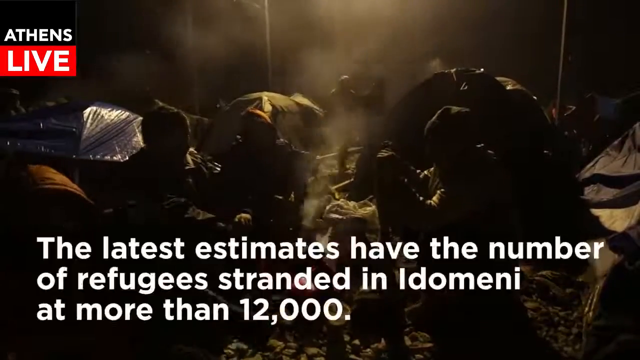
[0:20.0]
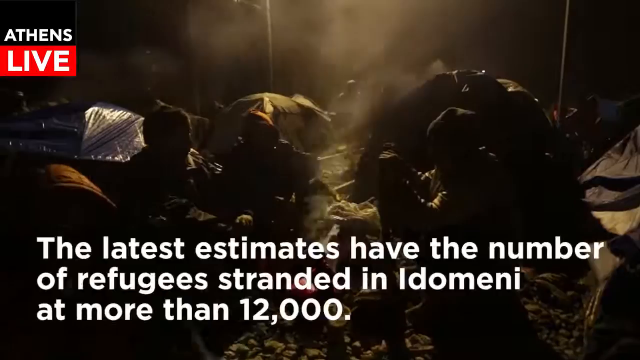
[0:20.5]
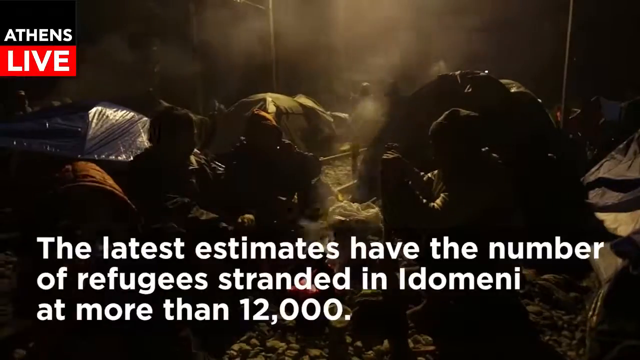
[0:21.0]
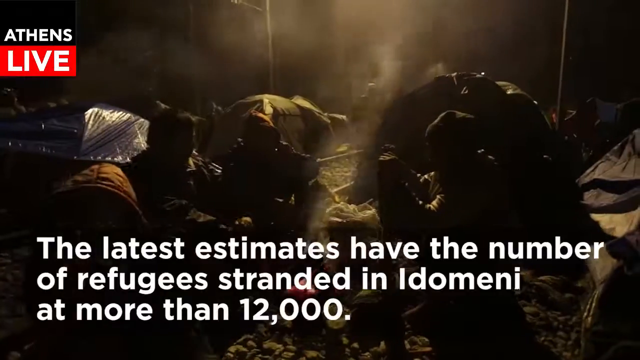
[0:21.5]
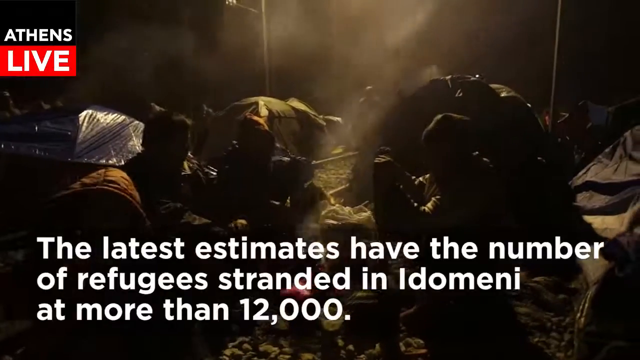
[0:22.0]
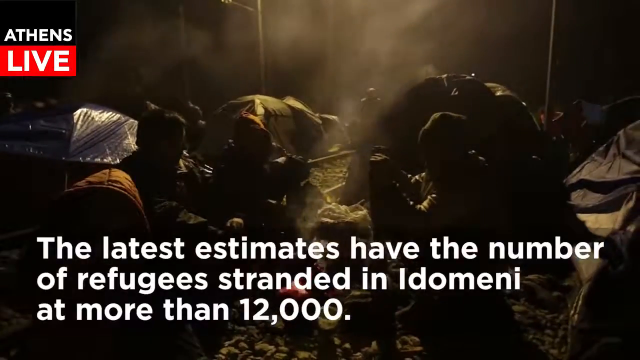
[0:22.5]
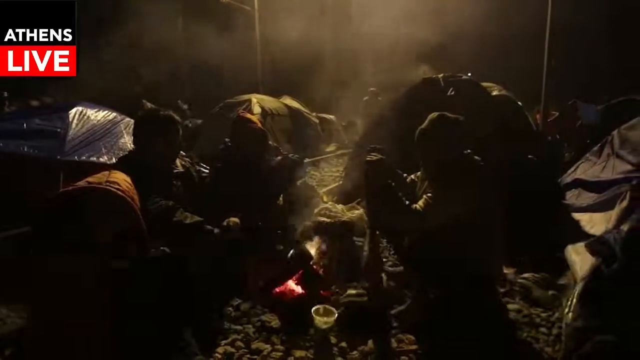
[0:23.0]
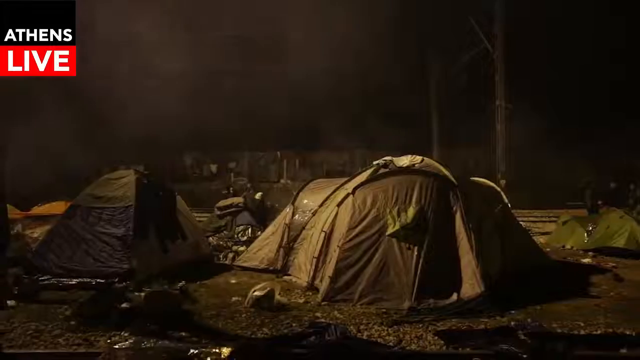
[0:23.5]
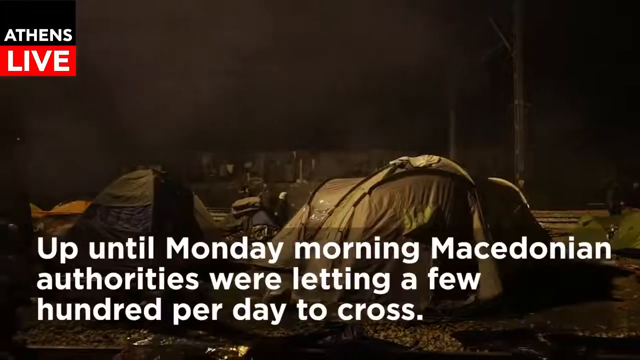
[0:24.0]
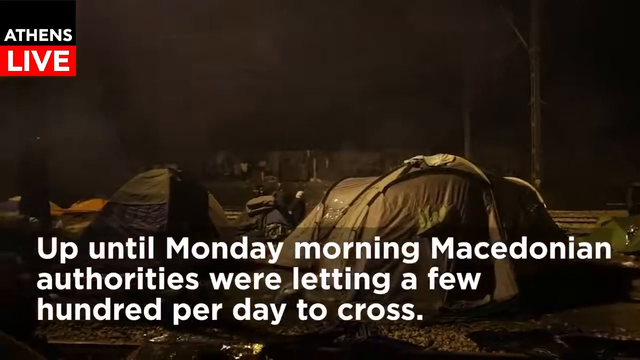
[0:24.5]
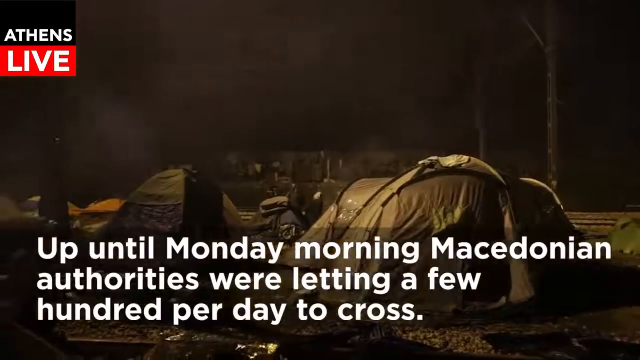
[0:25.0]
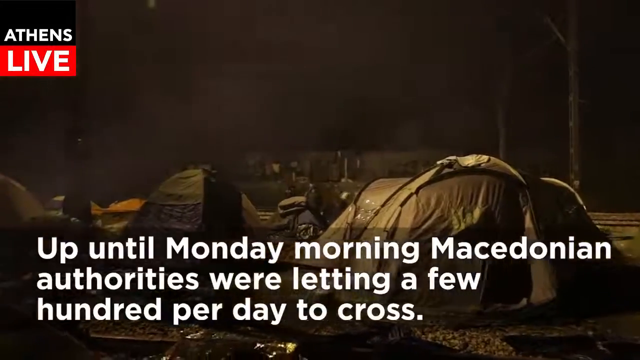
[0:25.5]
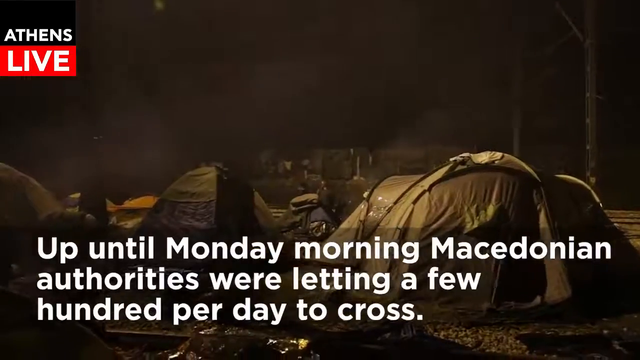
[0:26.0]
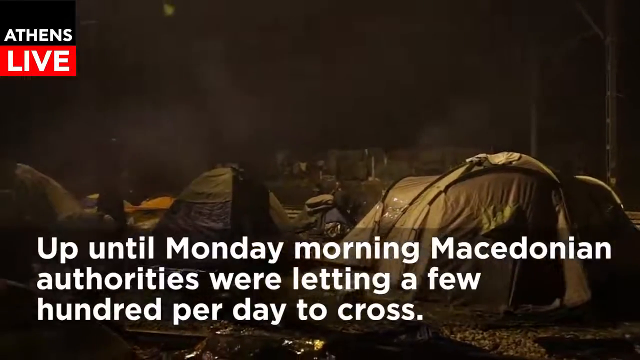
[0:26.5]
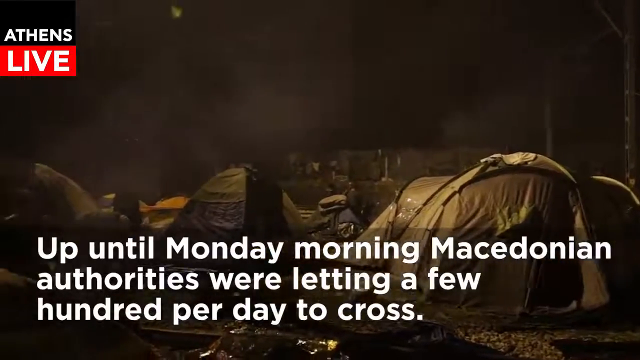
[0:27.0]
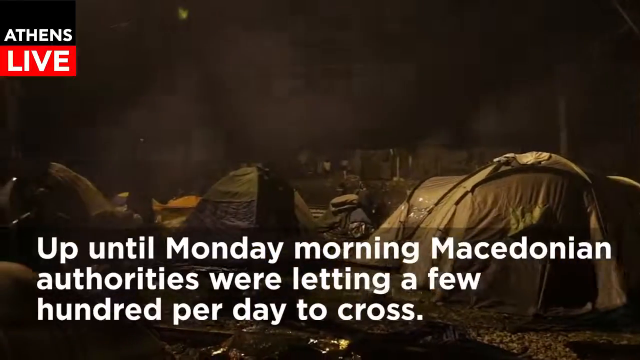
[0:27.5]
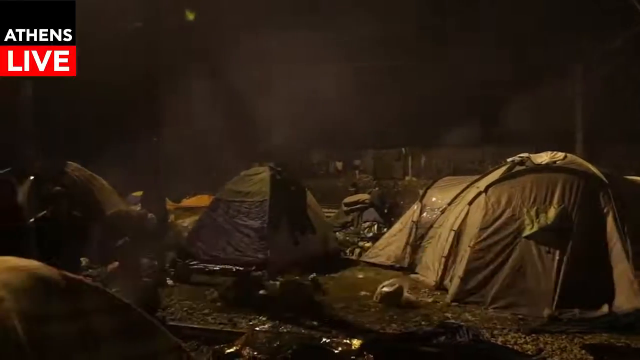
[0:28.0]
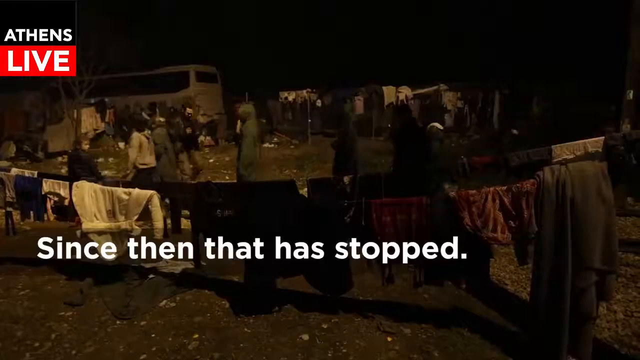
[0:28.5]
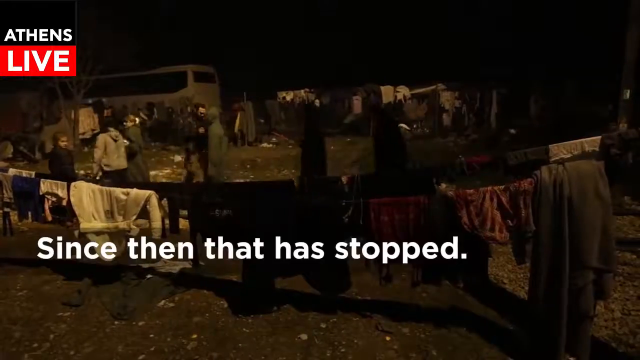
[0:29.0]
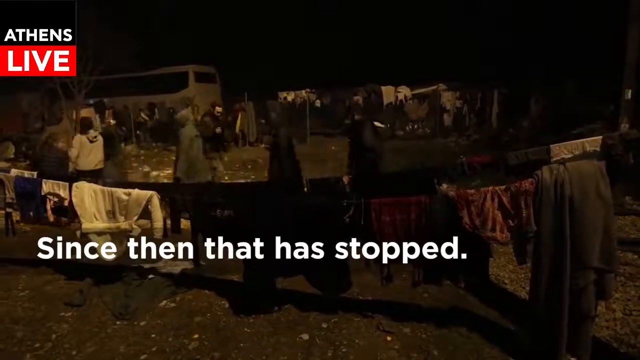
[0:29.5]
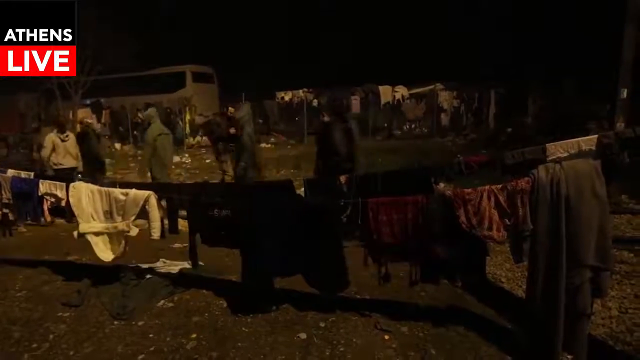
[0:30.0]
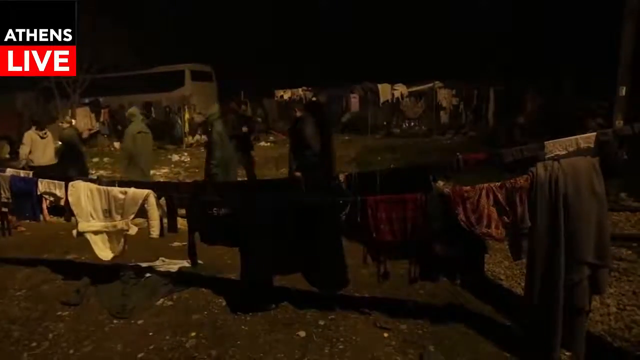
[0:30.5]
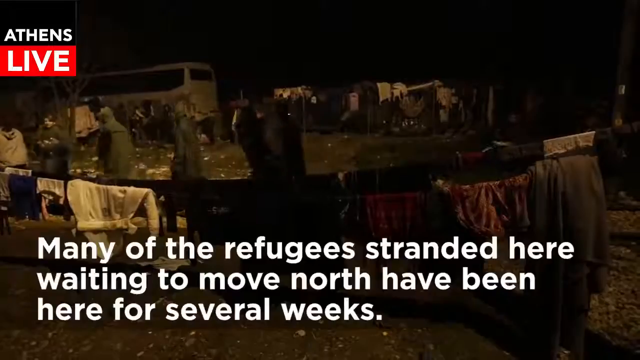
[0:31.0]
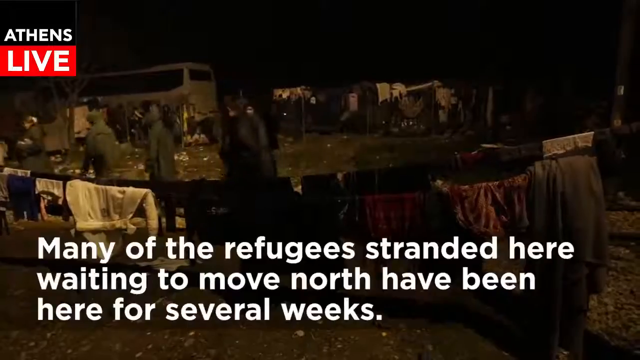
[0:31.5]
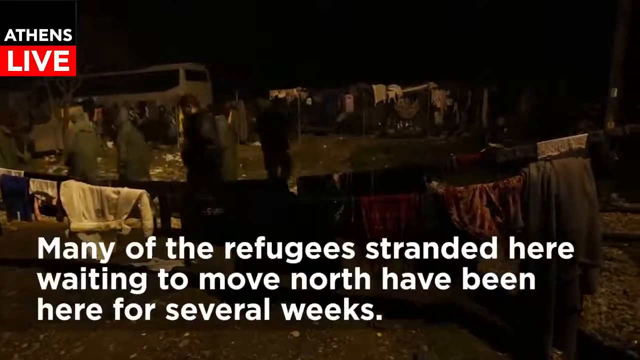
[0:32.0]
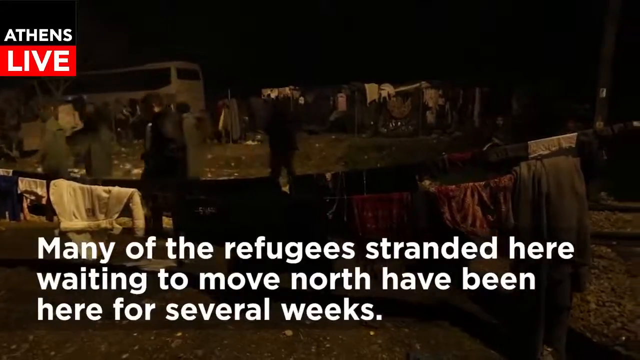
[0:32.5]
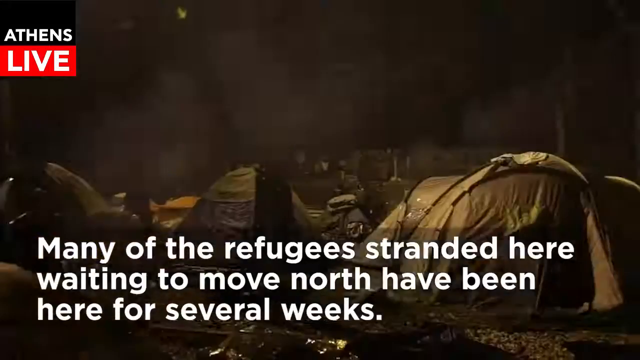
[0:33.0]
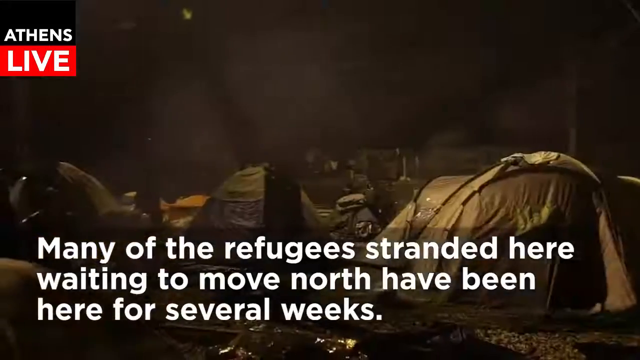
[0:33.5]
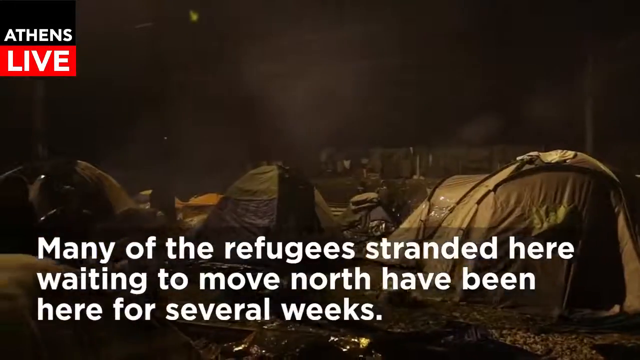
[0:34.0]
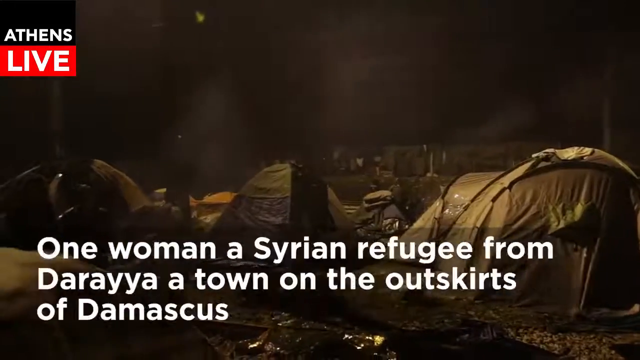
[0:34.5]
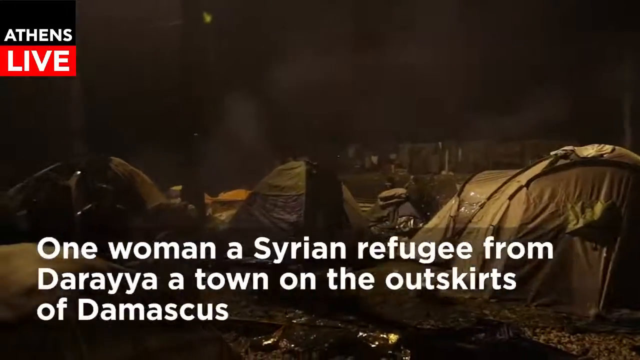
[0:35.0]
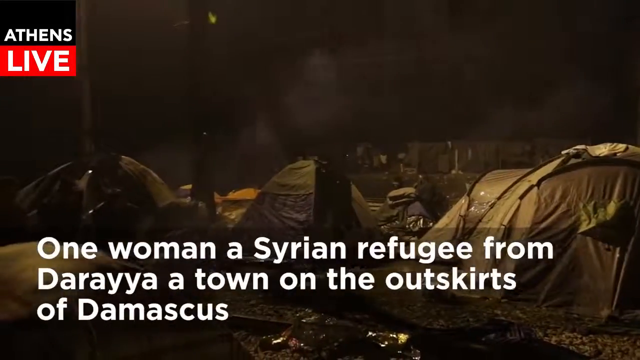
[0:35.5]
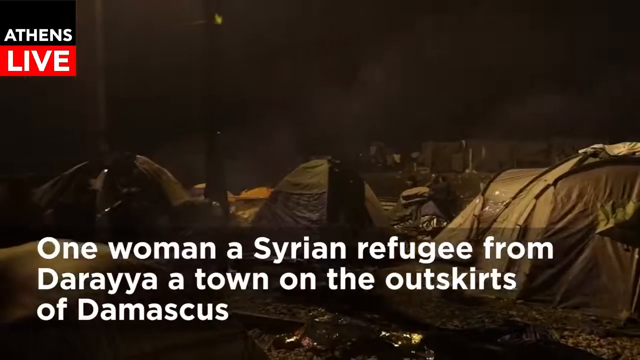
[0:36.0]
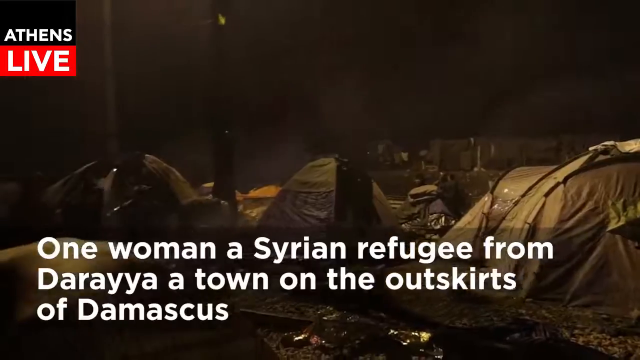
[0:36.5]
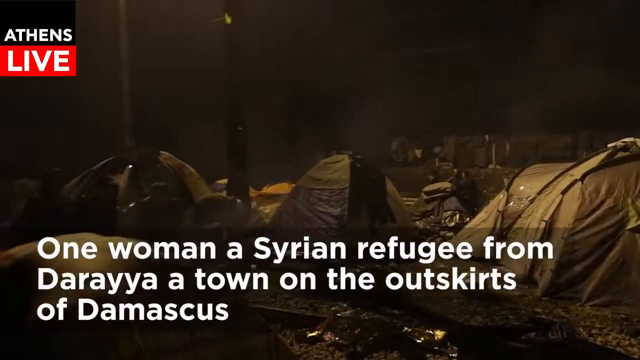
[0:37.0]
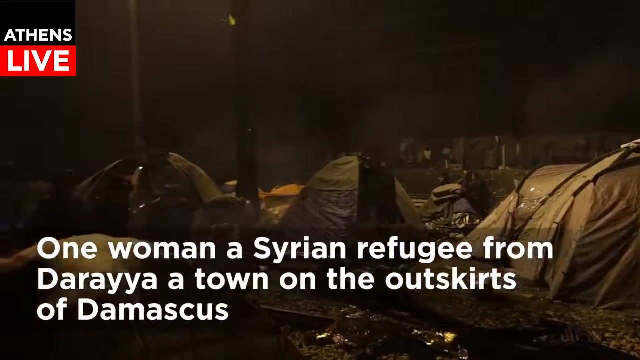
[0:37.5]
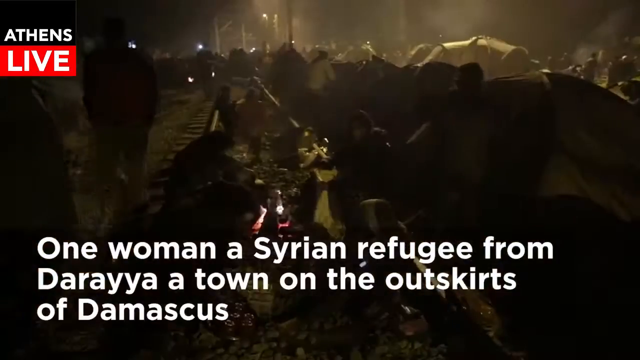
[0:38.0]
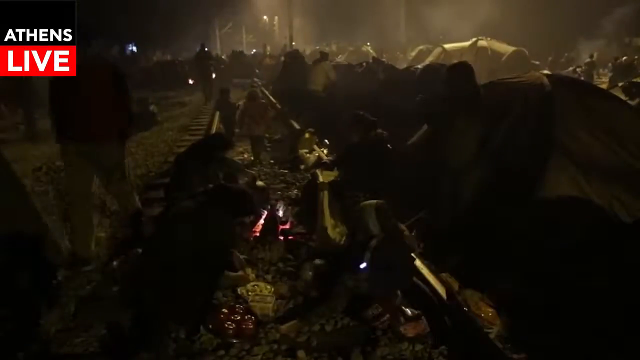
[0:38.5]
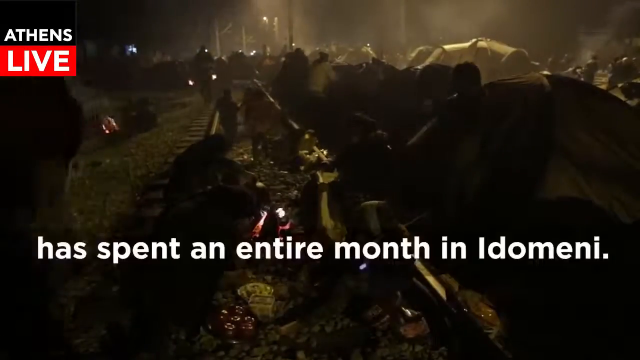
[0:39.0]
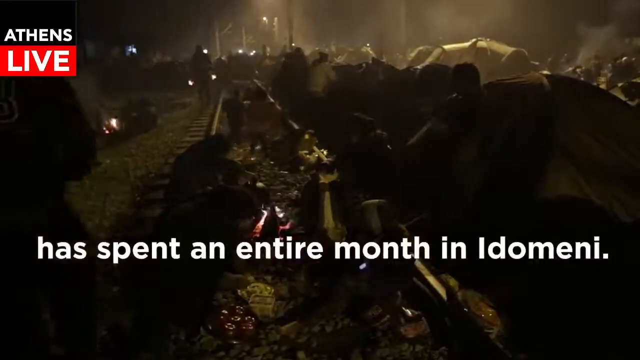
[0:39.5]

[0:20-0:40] Refugees are in an area with very rugged and rigid conditions, shown from different views and angles. There are many tents, and people walk along and by some train tracks; some people are camping on the train tracks. Fires are lit and smoke is in the air. A caption reads: "the latest estimates have the number of refugees stranded in Edimi at more than 12,000. Up until Monday morning, Macedonian authorities were letting a few hundred per day to cross. Since then that has stopped. Many of the refugees stranded here waiting to move north have been here for several weeks. One woman, a Syrian refugee from Jereia, a town on the outskirts of Damascus, has spent an entire month here in Edimi." The video continues to show the people living in this area and its conditions.